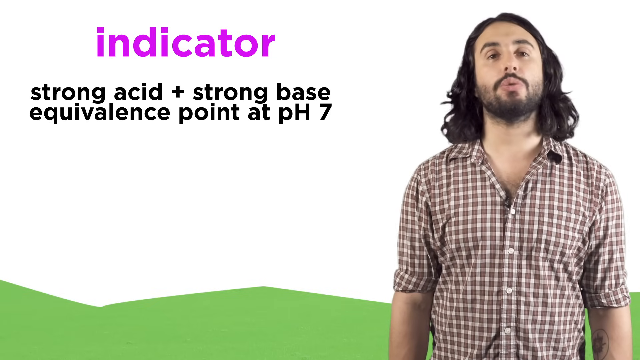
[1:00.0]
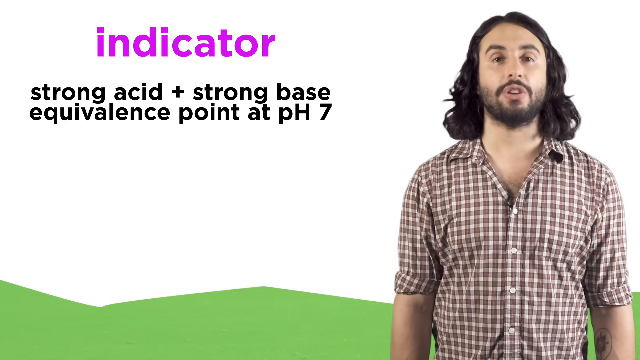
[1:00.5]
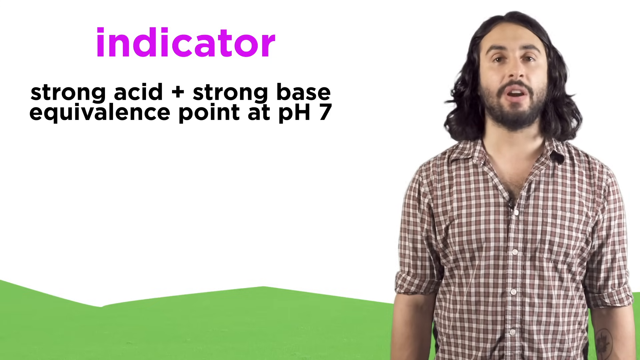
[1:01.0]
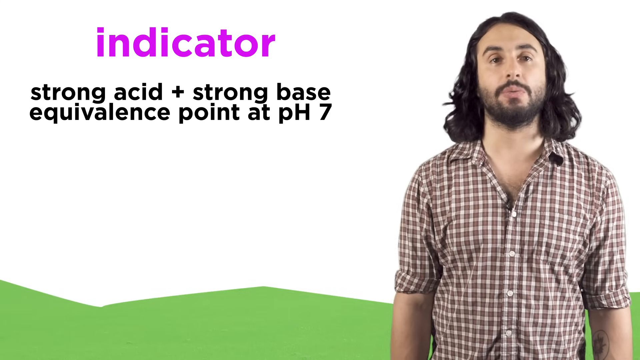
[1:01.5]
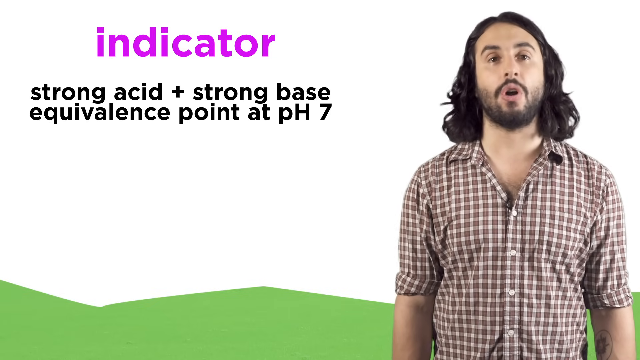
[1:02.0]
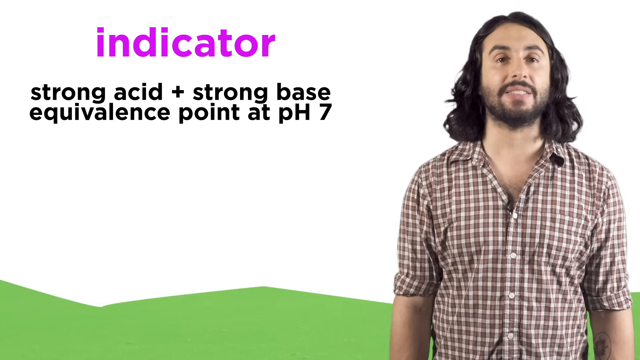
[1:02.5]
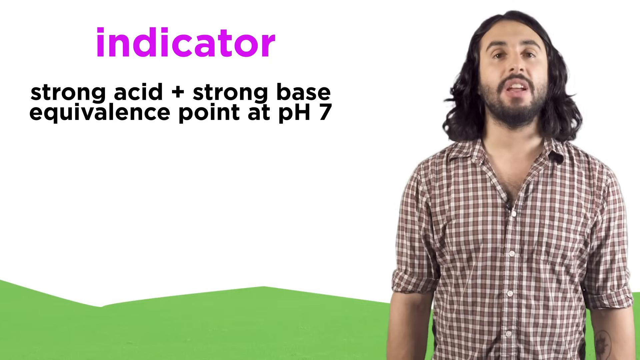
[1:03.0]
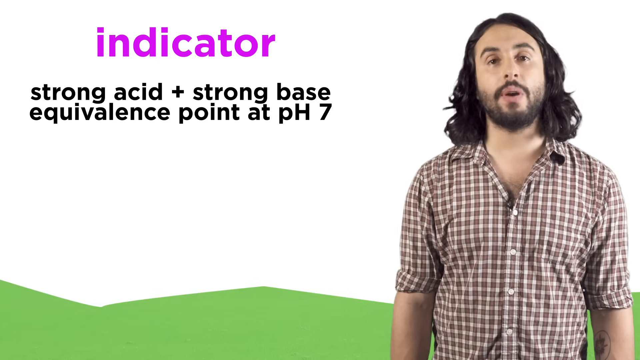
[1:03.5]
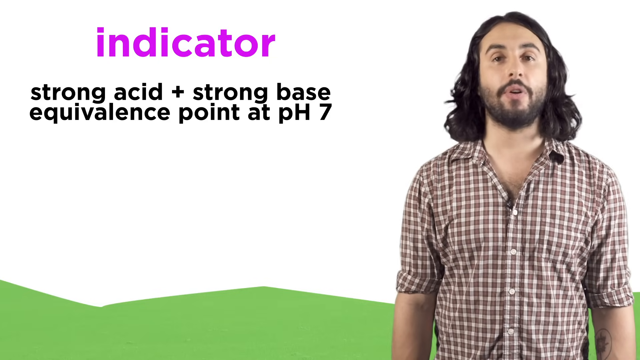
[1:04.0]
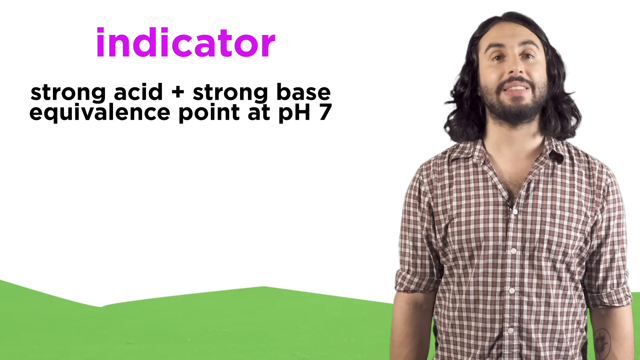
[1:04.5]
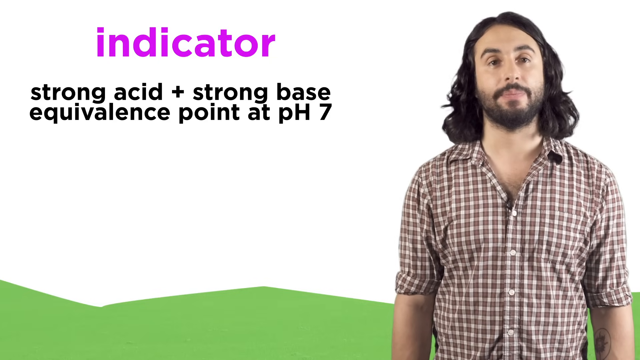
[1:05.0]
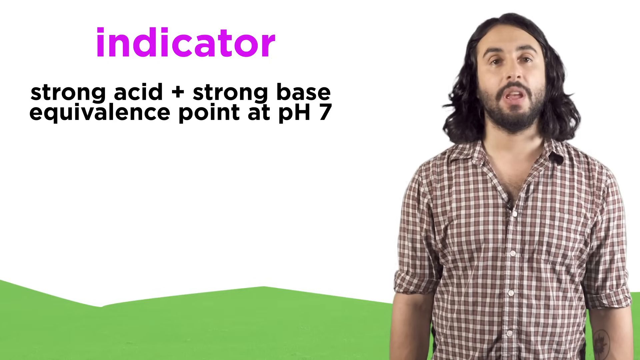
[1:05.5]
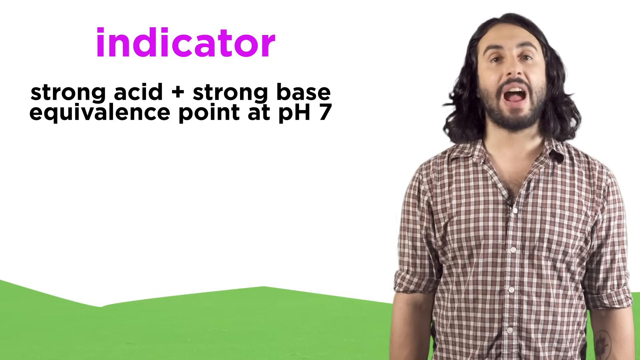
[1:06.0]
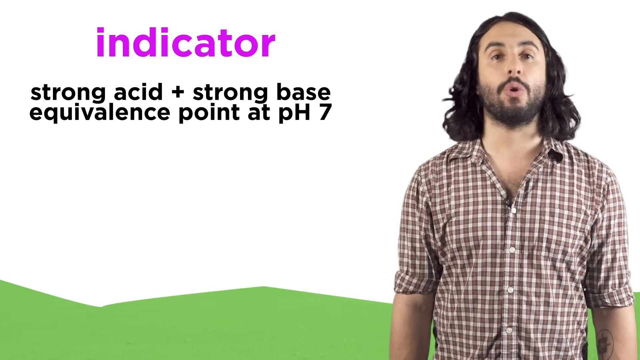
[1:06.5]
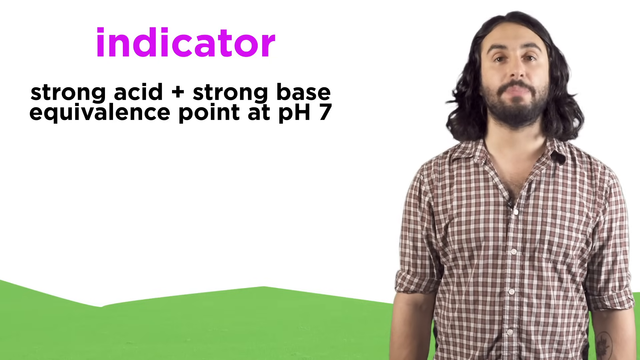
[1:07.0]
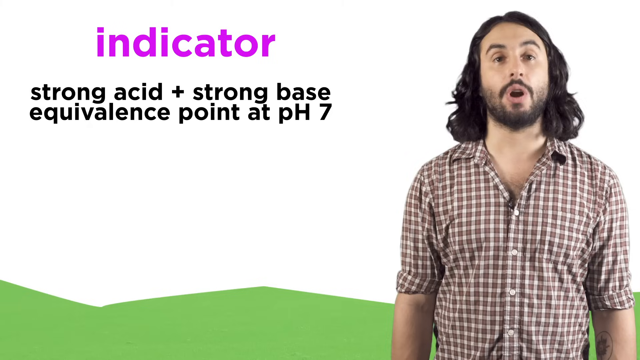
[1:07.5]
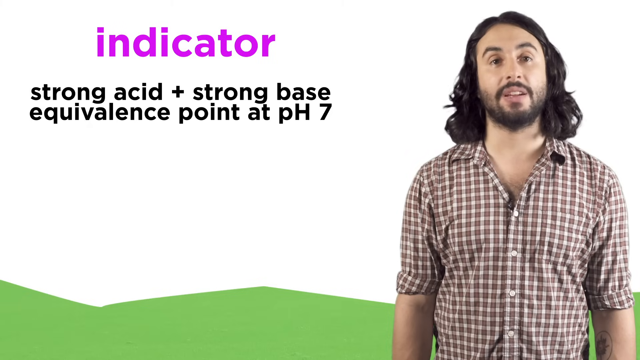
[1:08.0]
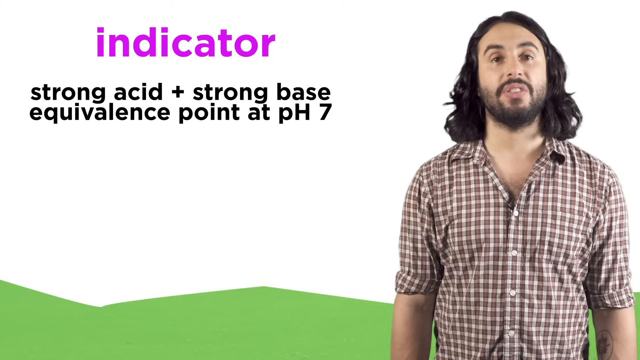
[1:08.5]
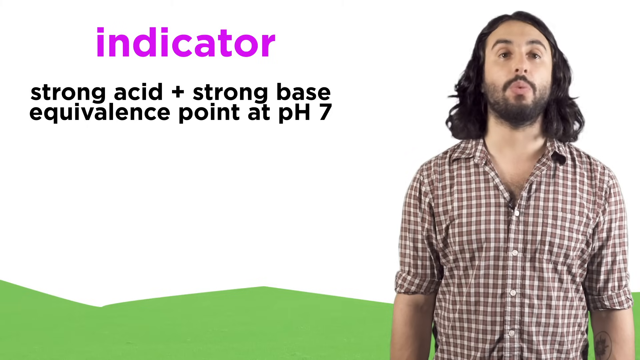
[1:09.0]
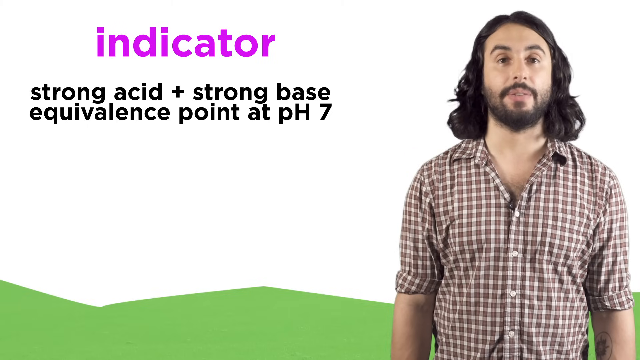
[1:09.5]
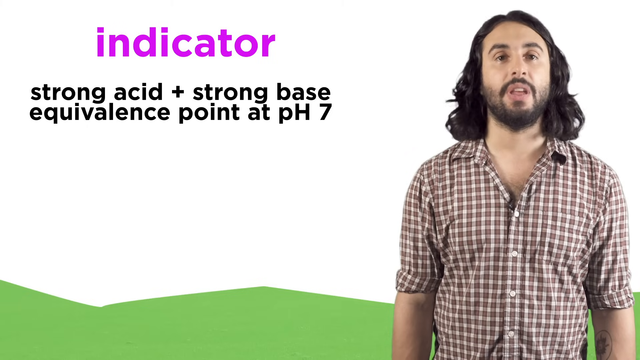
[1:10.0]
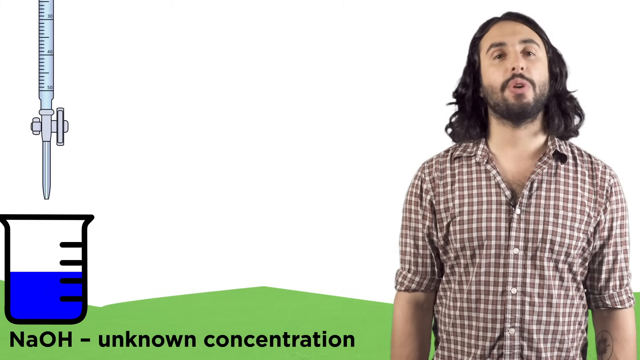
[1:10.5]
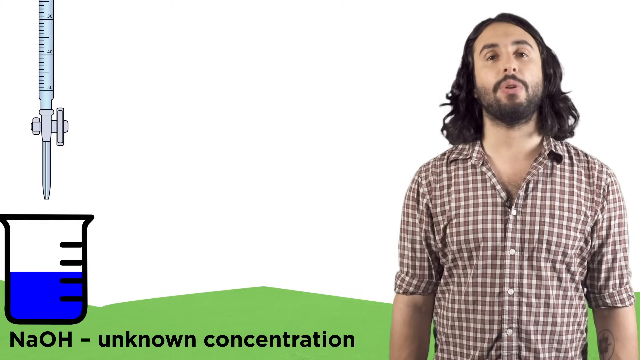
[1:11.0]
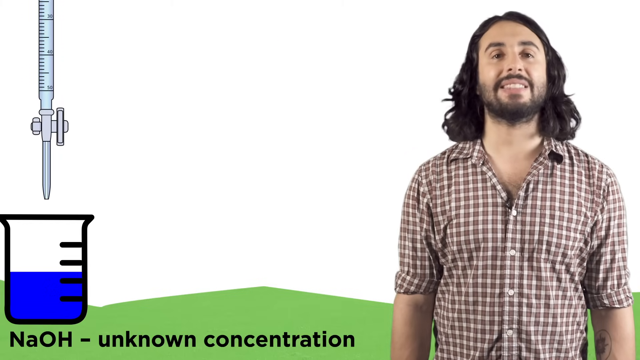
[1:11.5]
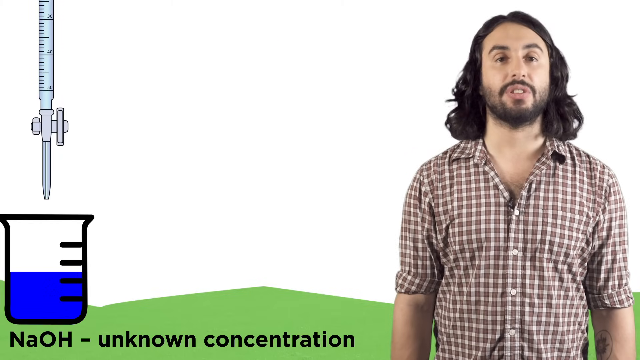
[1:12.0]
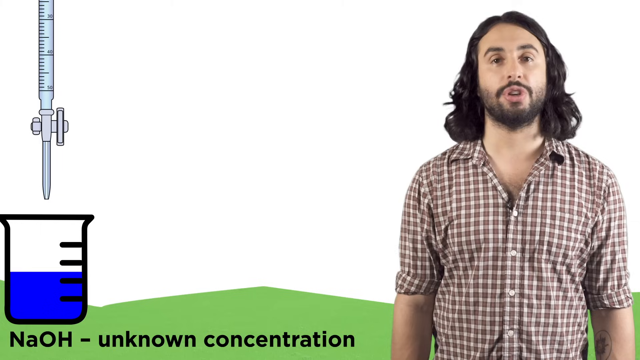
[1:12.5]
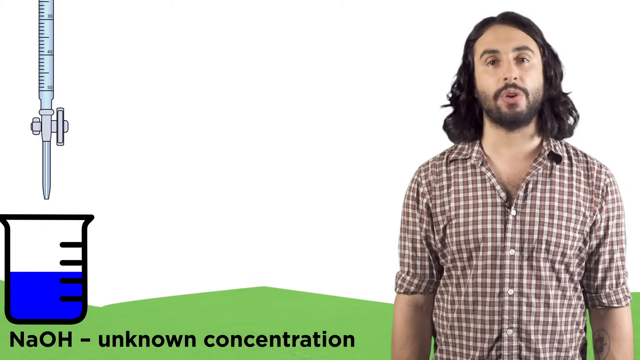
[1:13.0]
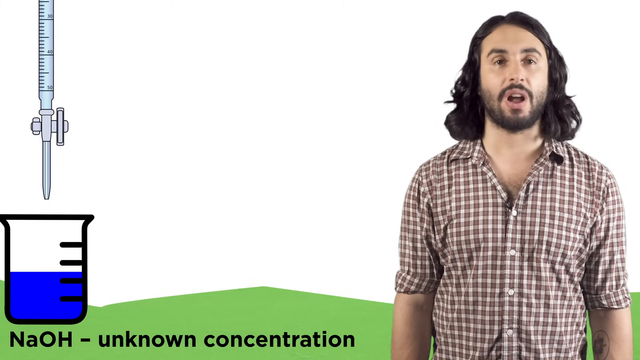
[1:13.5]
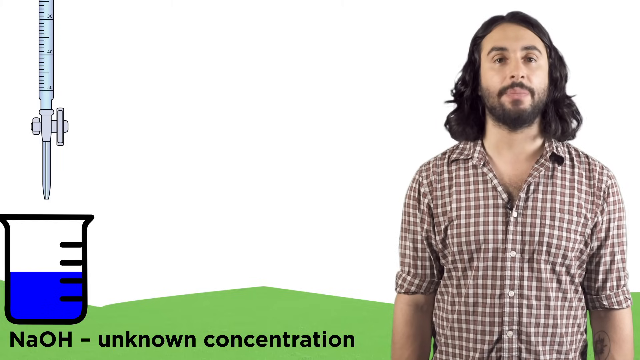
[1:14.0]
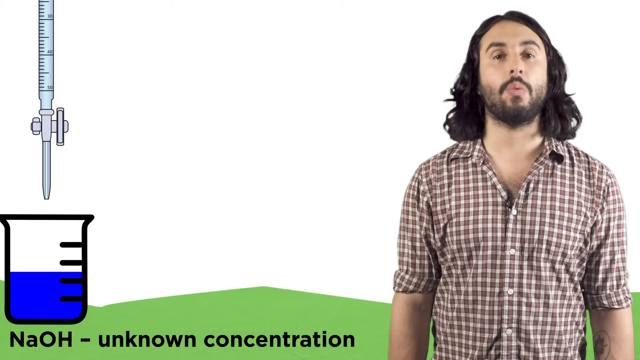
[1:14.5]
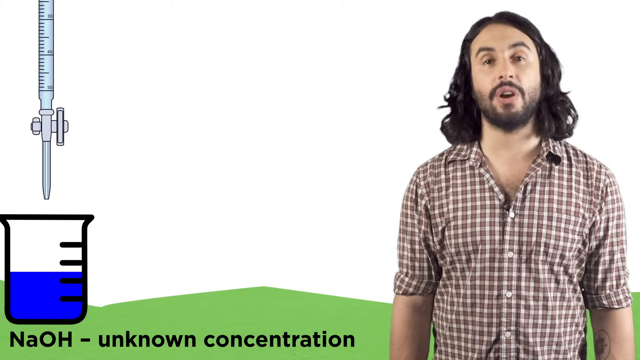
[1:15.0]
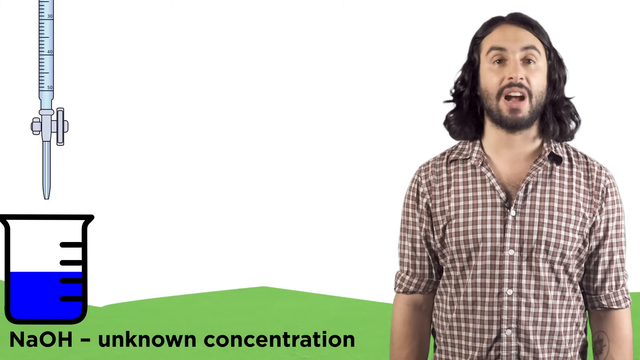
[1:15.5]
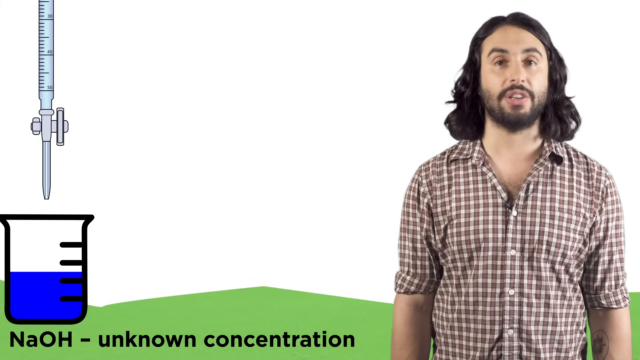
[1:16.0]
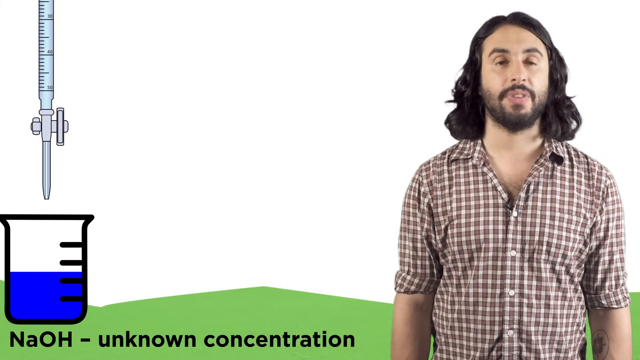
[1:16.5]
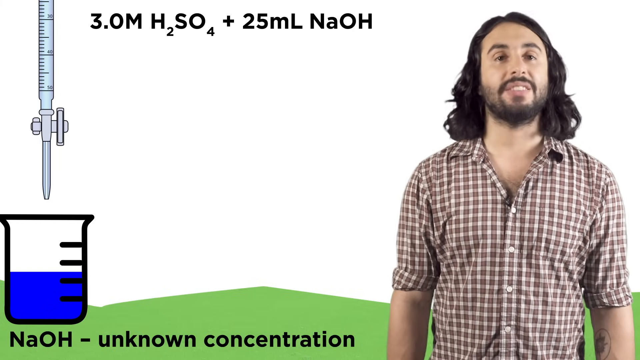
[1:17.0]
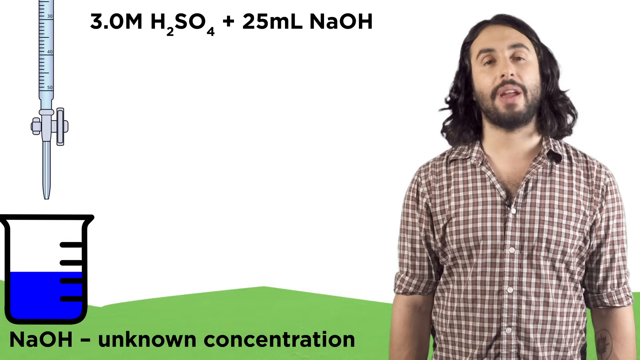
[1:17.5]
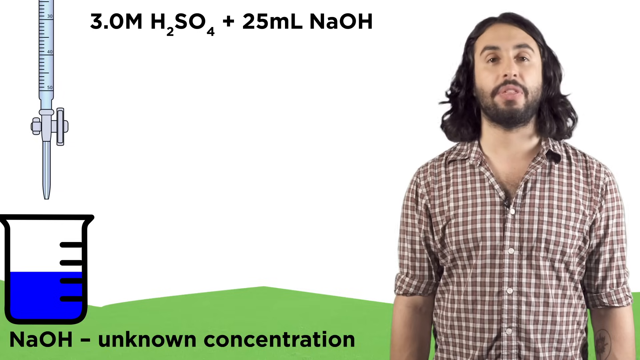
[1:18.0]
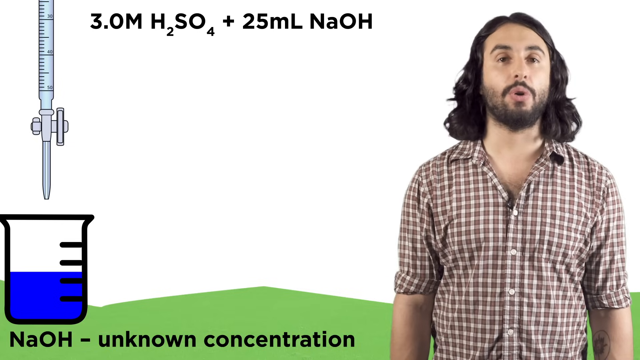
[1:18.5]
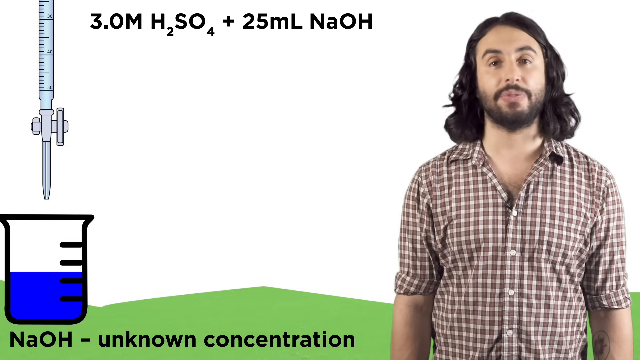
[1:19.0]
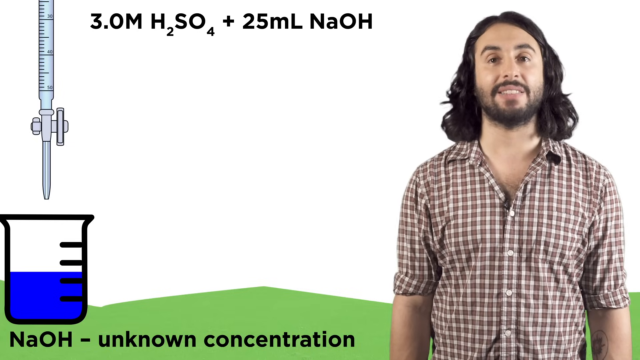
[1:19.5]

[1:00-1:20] The man talks about the indicator. He has long black hair and a short beard. Beside him is an apparatus labeled "NA or H unknown concentration", followed by something that looks like an injection with measurements, which pours into the apparatus. He apparently explains the process, seemingly now showing how the experiment is done. He wears a checked shirt with one button open and a small mic pinned to it. He looks directly at the camera, and his facial expressions look like he is explaining carefully.